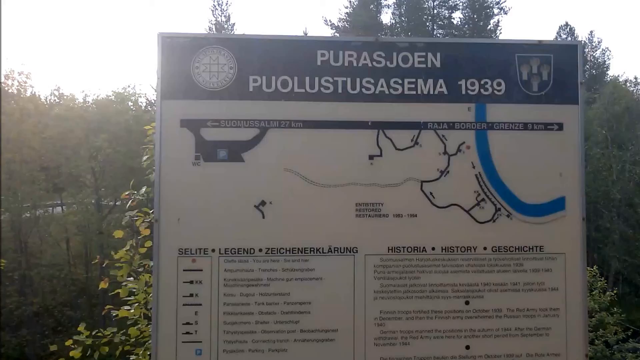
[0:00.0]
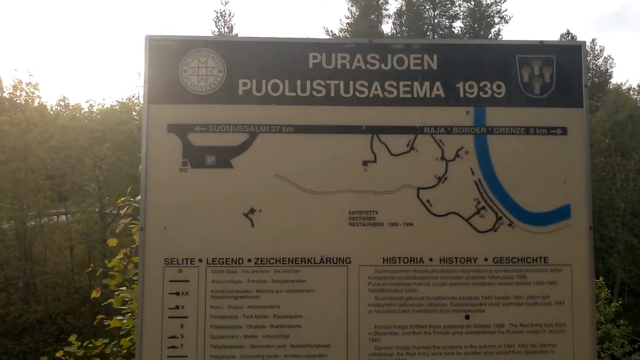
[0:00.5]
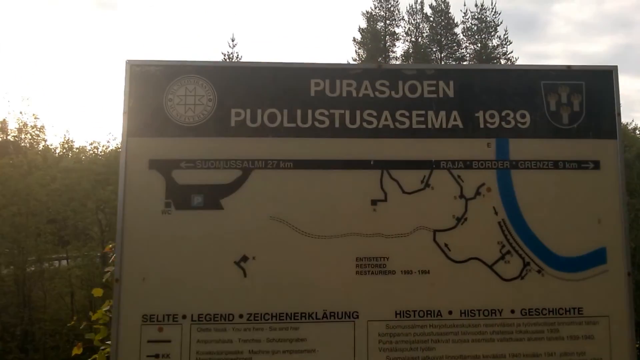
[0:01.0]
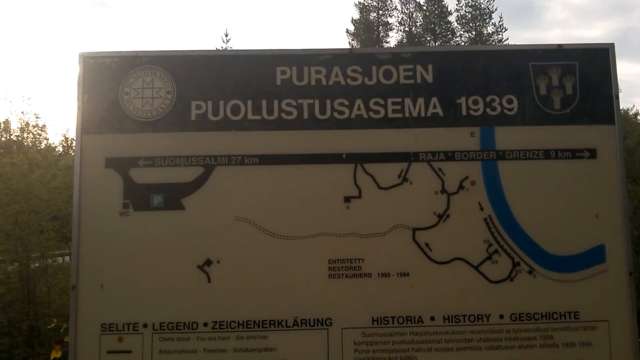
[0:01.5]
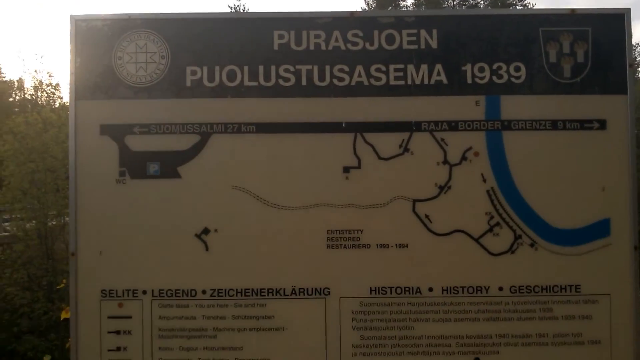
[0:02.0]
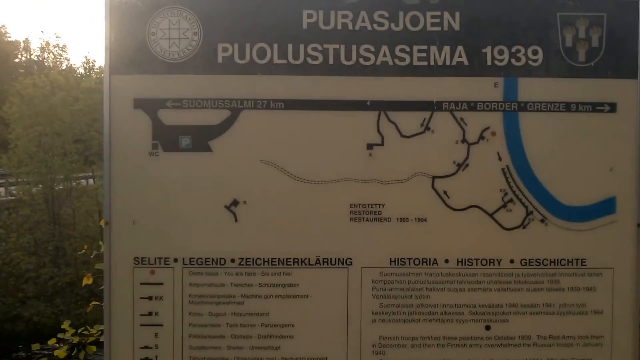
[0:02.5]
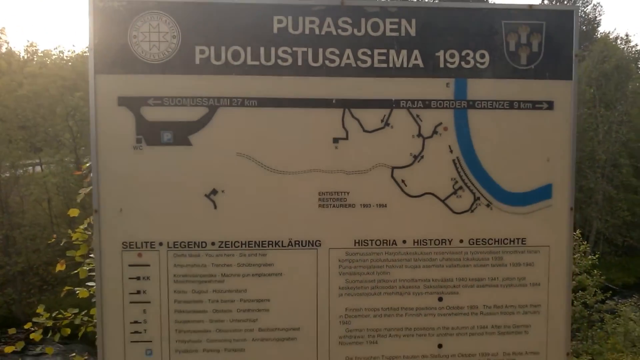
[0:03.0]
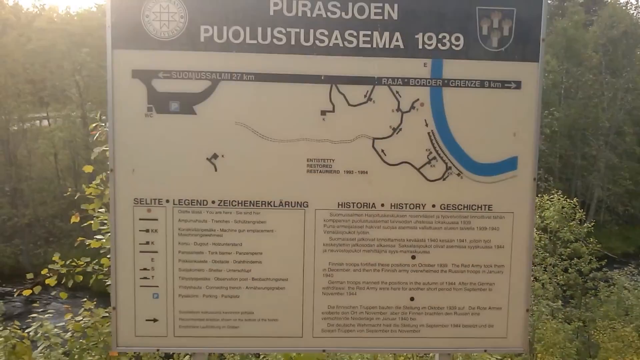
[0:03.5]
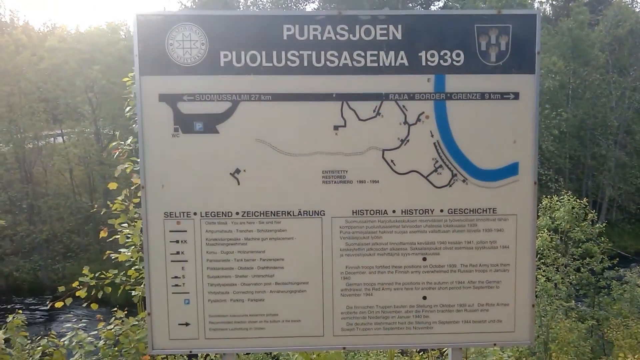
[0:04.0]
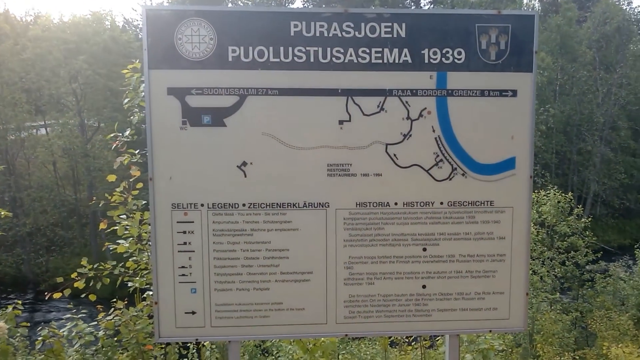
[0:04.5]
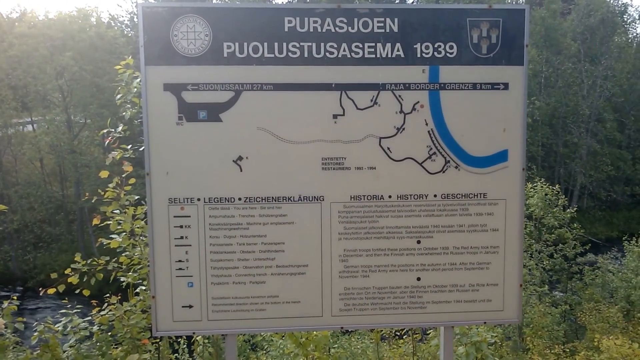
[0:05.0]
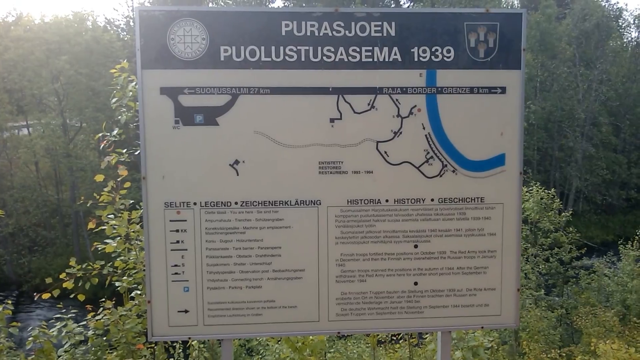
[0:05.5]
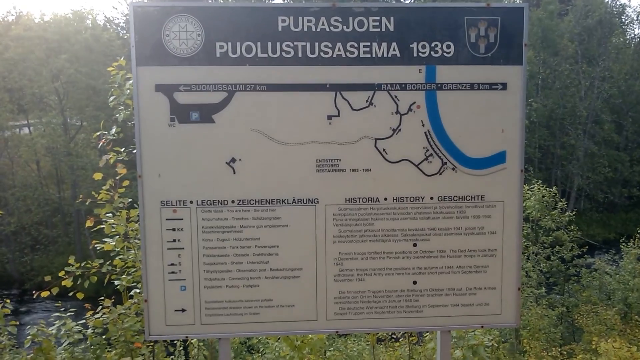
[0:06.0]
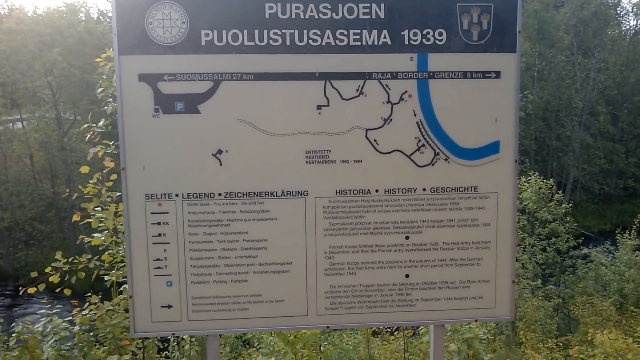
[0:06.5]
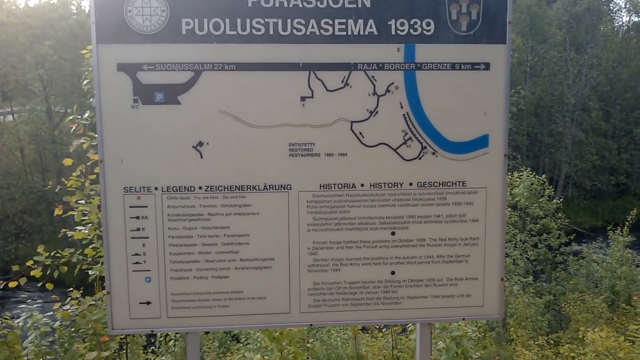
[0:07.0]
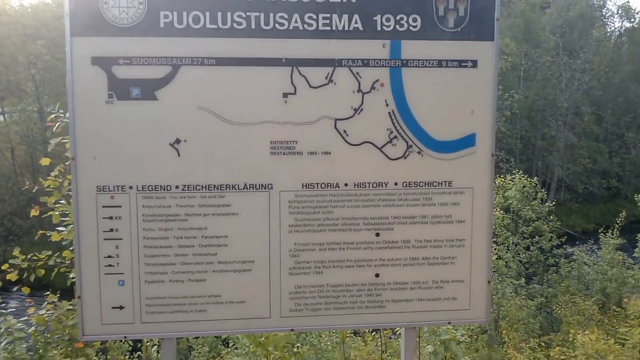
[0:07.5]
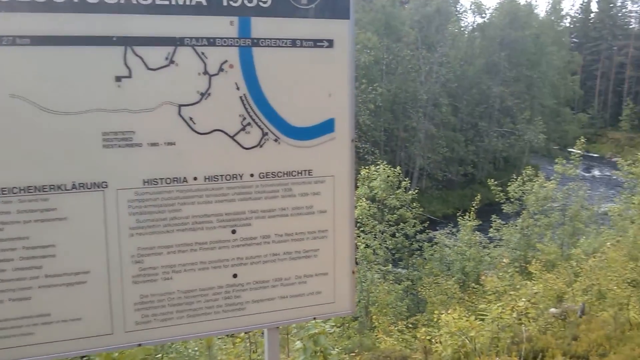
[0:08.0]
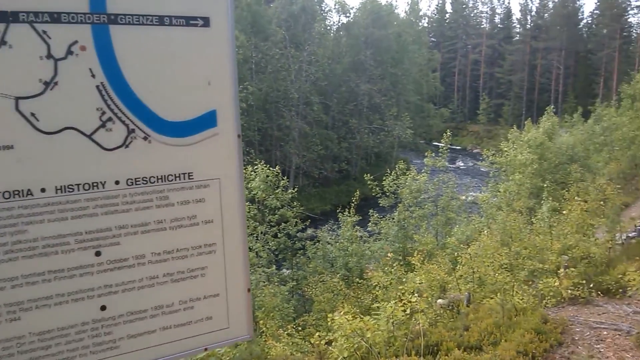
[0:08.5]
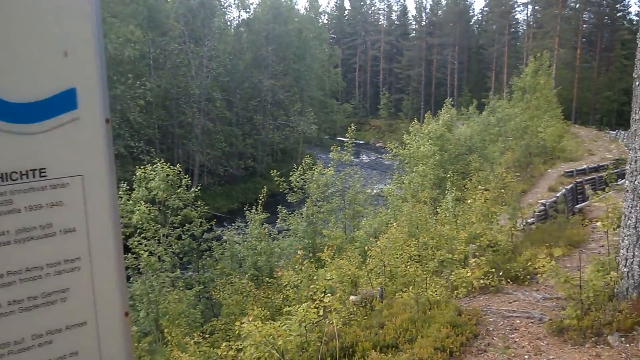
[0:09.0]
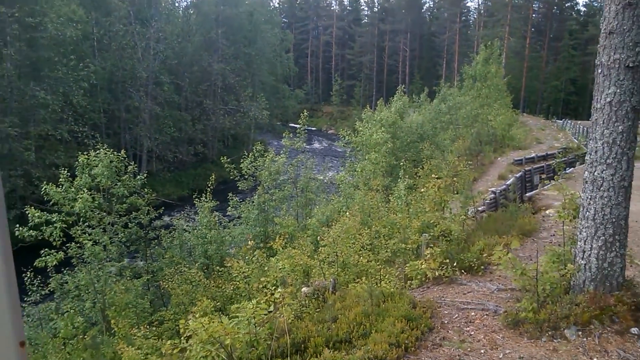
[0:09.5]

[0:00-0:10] The video opens in an outdoor area, though little of it is visible because the shot is focused on a sign. The sign is in a language other than English and appears to be in several different languages. It carries various symbols and crests, presumably from some organization, and has a legend. The sign looks informational, with a type of map on it and some information on the history of the area, presumably the mapped-out area shown. The video does not zoom in close enough to read the text on the sign.